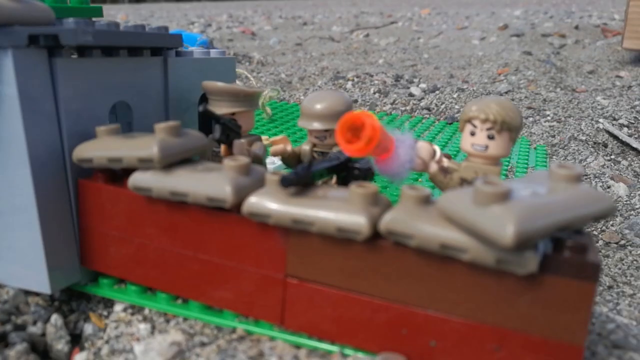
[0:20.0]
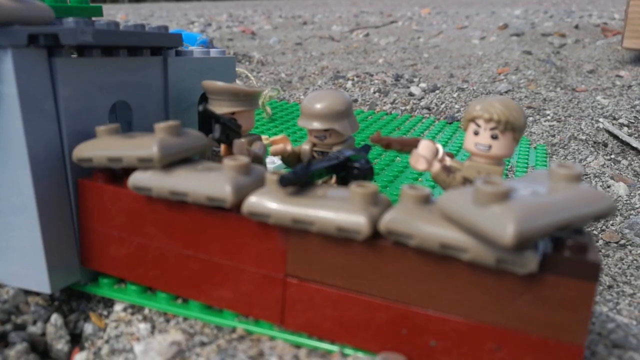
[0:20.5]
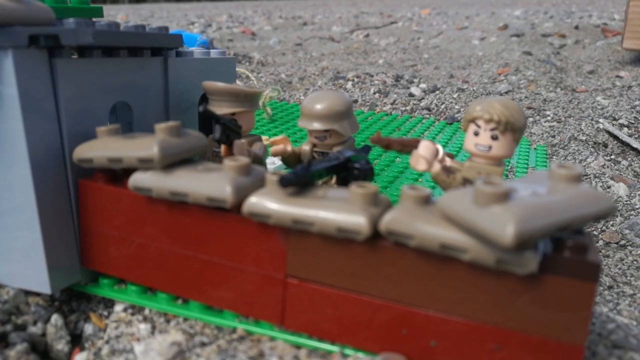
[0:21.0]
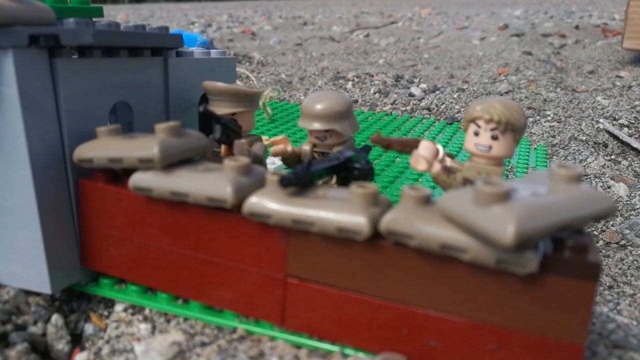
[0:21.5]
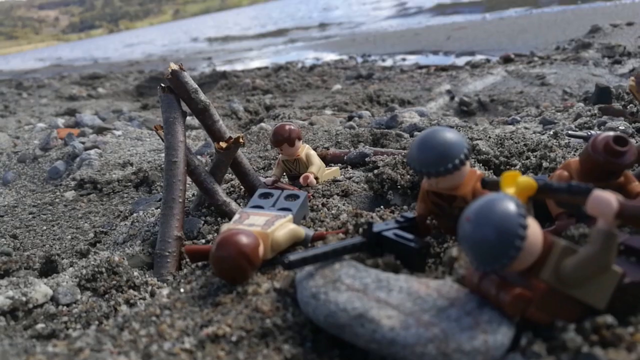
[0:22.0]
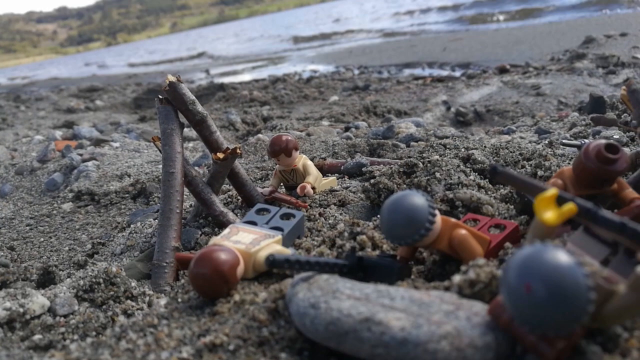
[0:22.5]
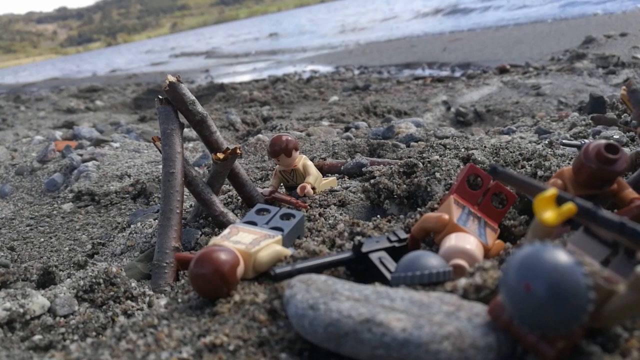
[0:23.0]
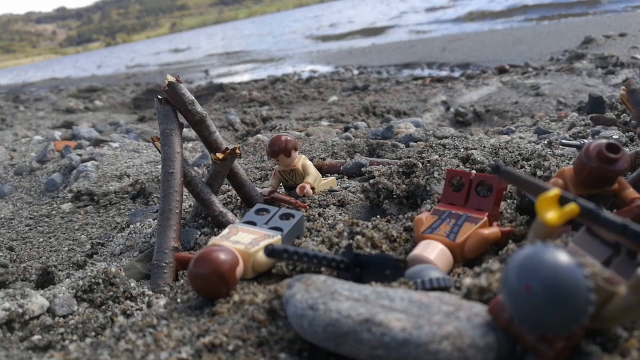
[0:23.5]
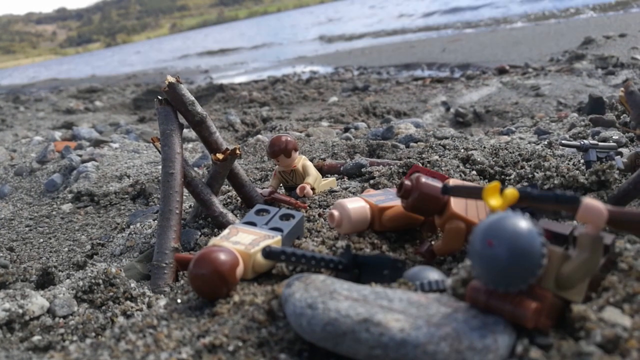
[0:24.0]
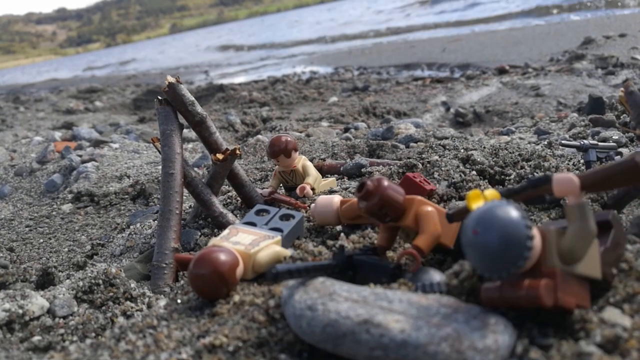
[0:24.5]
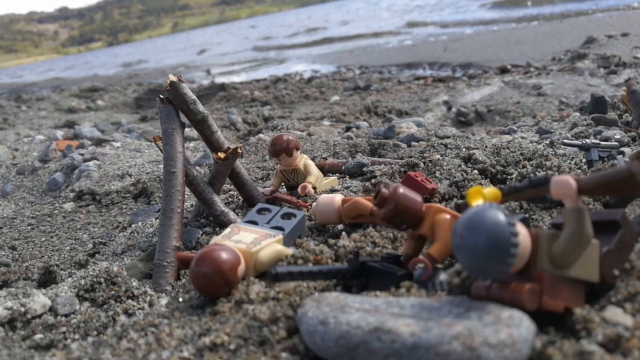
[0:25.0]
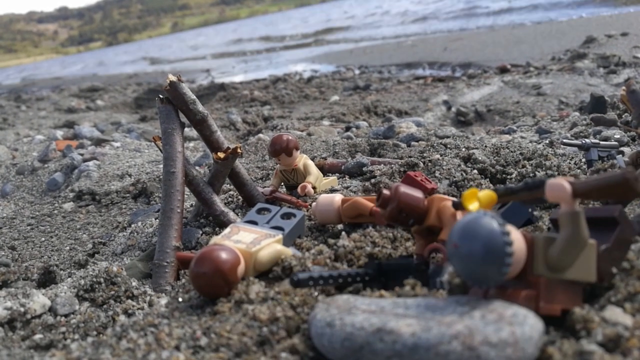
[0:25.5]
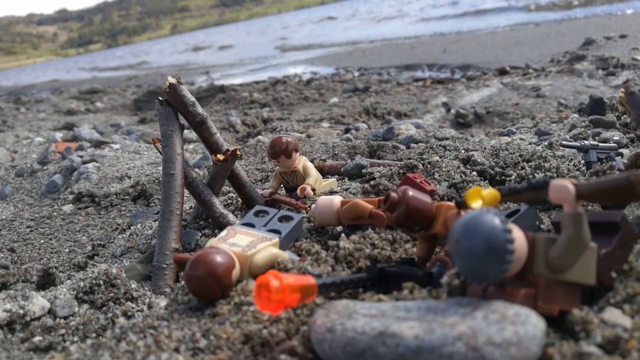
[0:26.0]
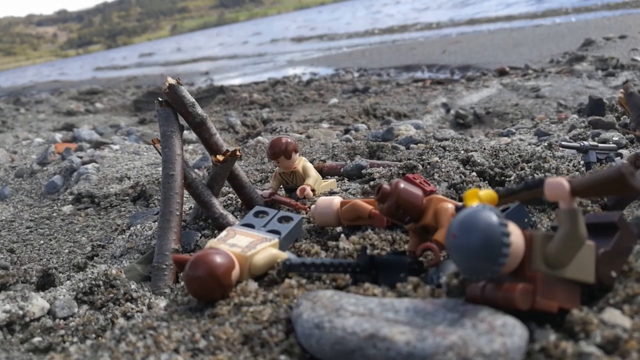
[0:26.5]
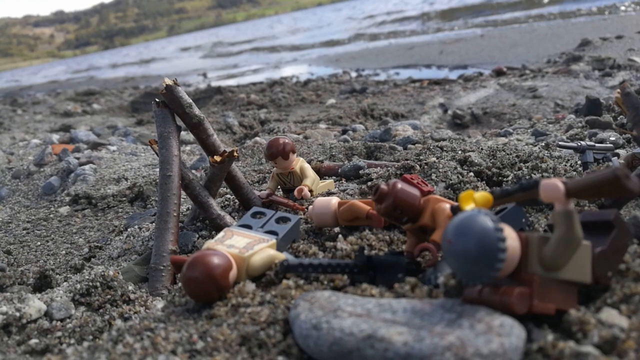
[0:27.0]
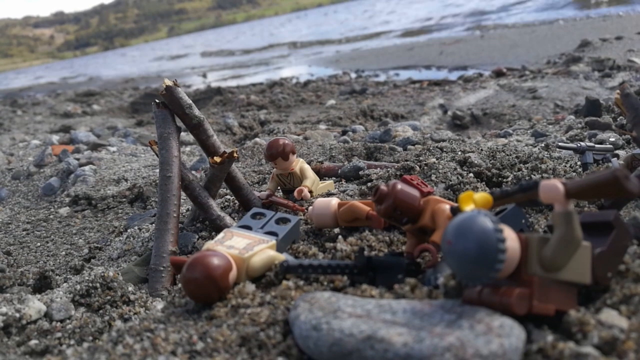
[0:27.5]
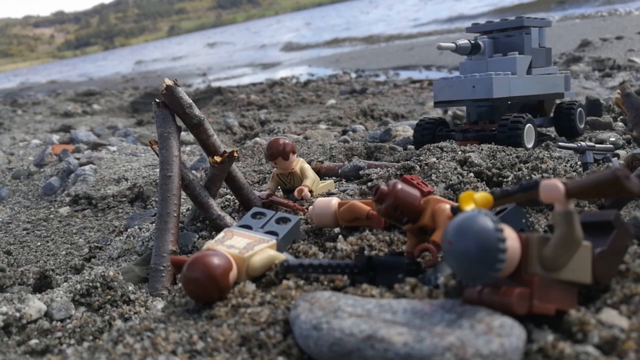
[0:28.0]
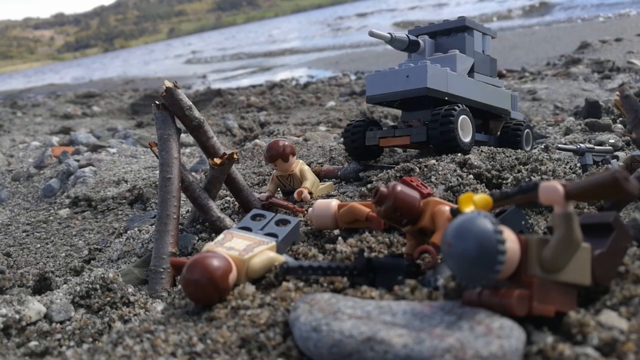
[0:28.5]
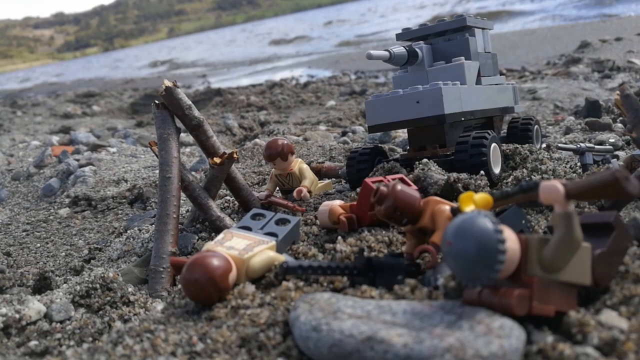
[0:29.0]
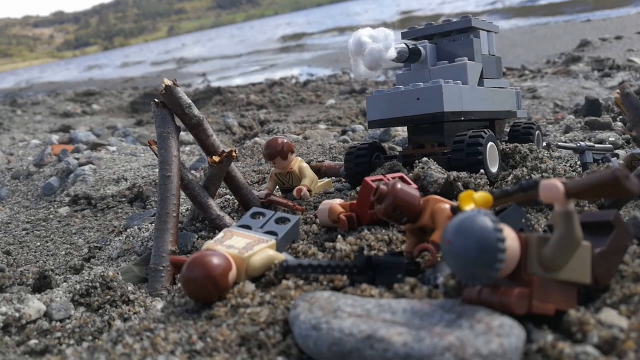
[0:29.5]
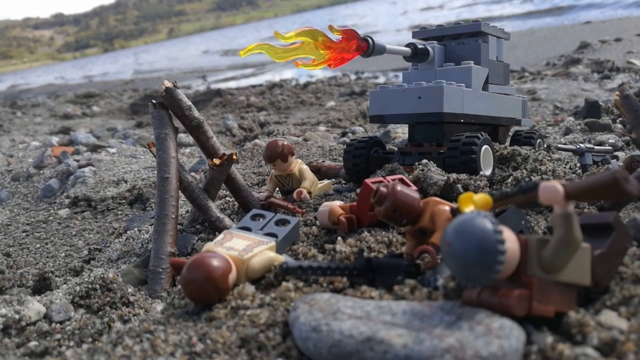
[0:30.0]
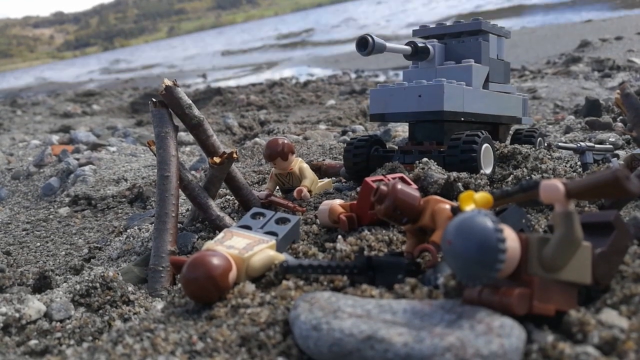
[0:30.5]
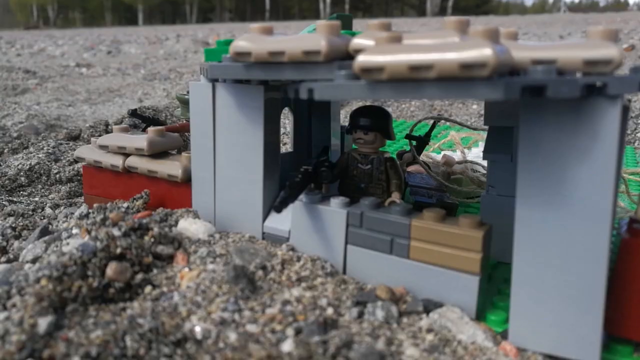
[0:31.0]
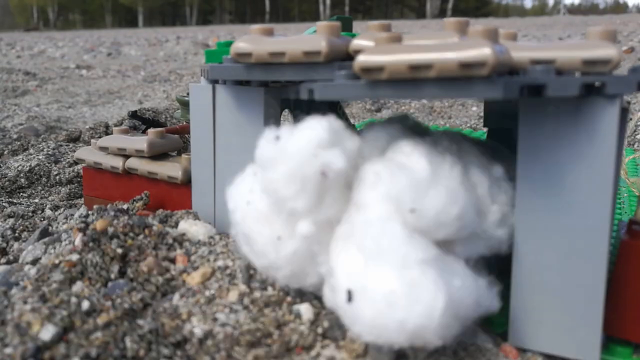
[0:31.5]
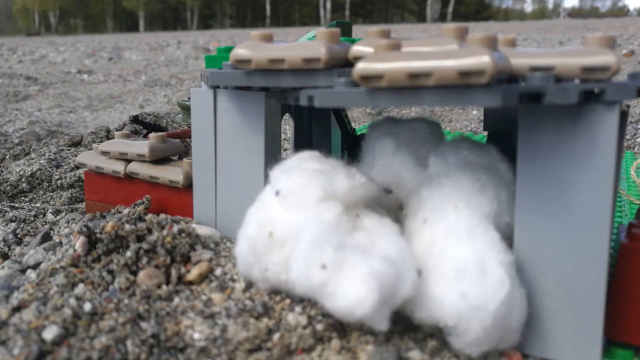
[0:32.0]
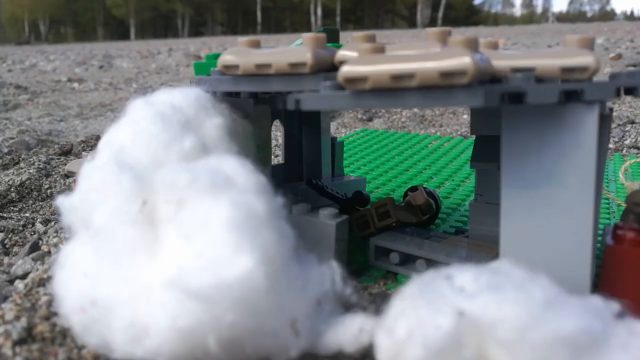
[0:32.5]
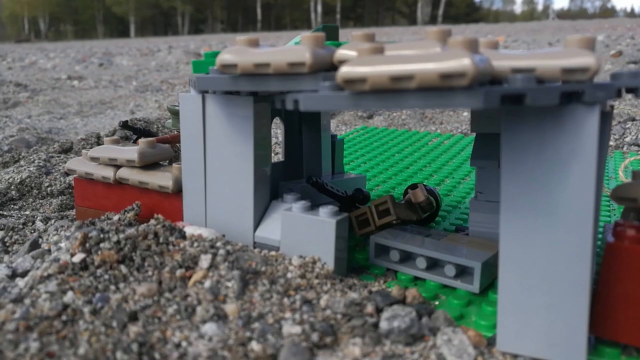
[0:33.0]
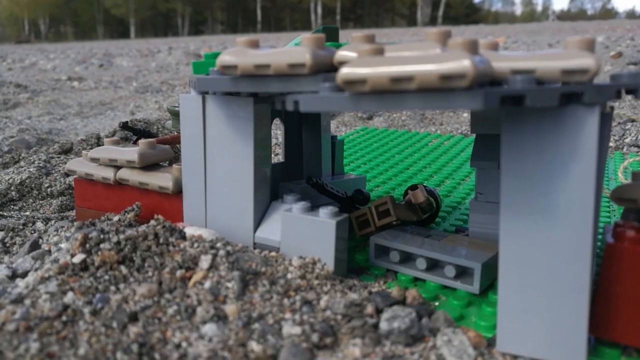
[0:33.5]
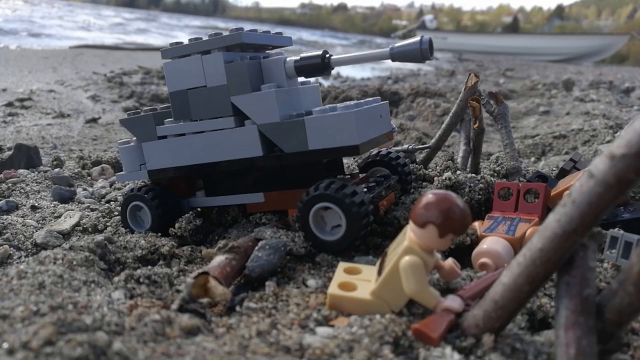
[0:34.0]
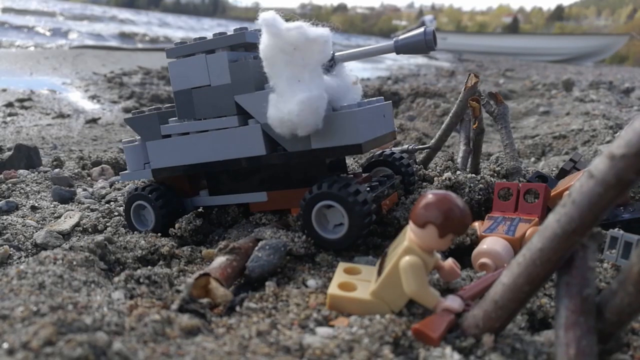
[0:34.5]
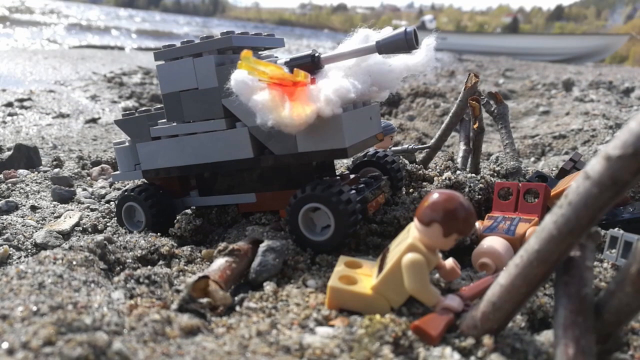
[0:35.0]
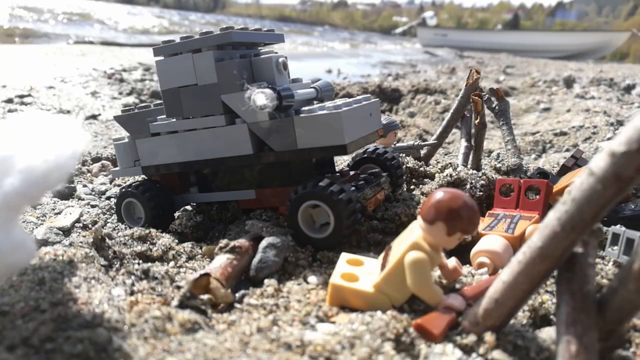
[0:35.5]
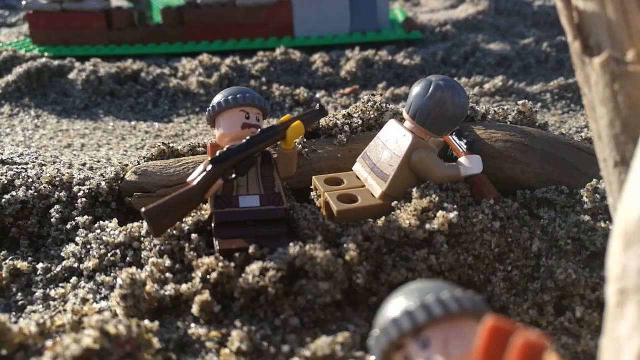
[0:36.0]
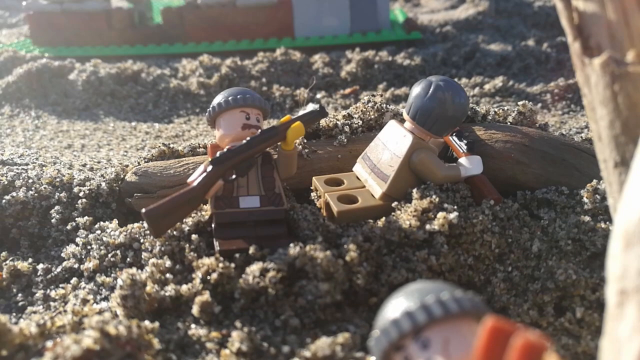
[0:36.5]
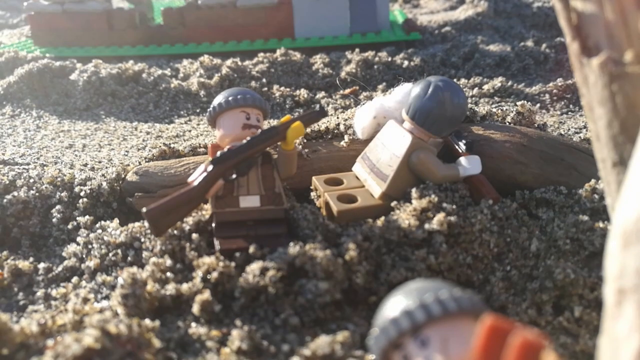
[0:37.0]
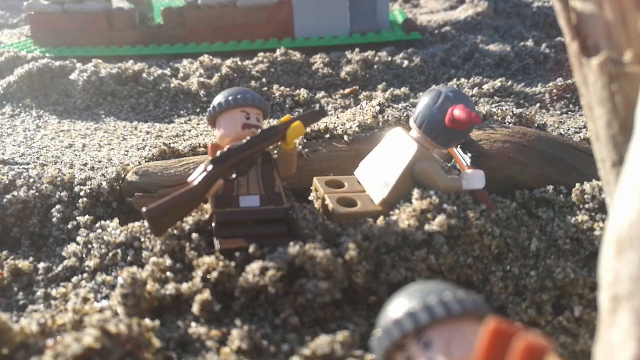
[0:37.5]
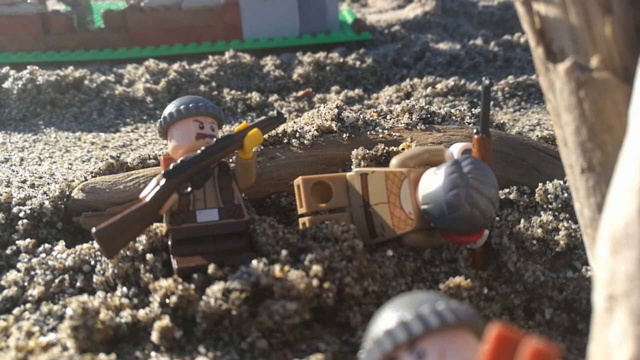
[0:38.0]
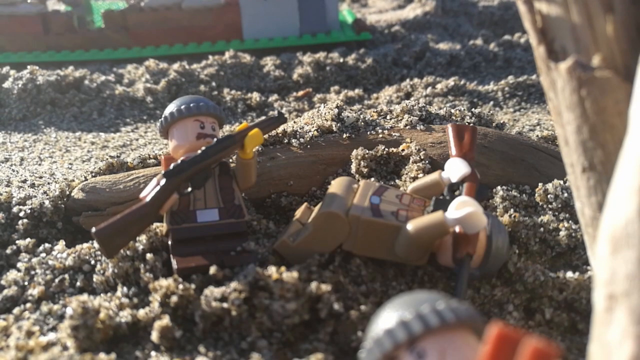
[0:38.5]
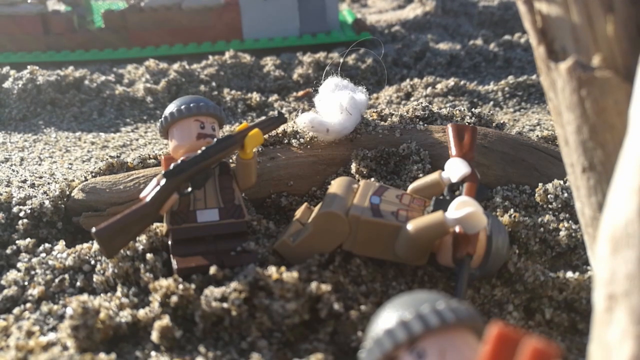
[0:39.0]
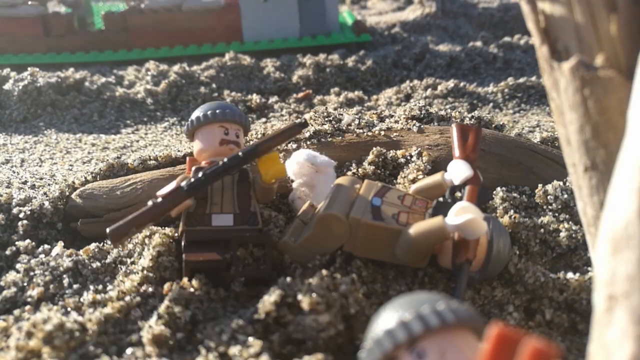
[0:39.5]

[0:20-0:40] A battle develops. The Germans fire down the beach from their bunker while the attackers try to advance up the beach. Some of the little LEGO men are down, but the attackers bring up a bigger gun on a platform, apparently meant to be a tank, and shoot back. The Germans also fire back with bigger guns from the bunker. Smoke special effects appear as the attackers push toward the German bunker. The tank fires and blows up the German bunker, but the fighting continues. The figures coming up the beach look more like they are wearing British tin hats. The Germans wear all kinds of mixed uniforms; some wear a German-style helmet and some have flat caps.